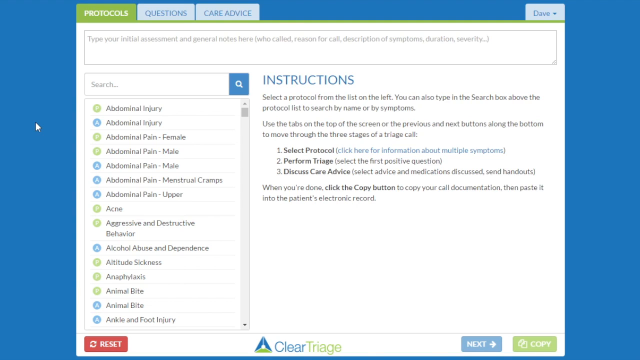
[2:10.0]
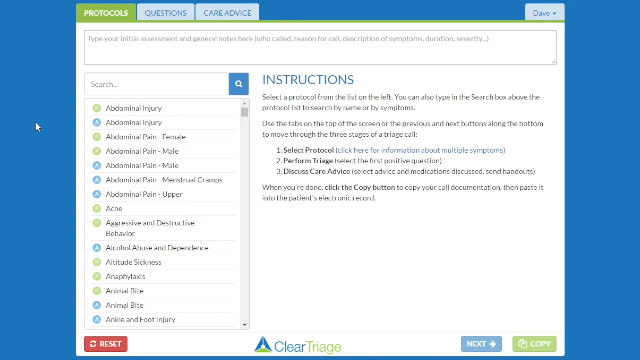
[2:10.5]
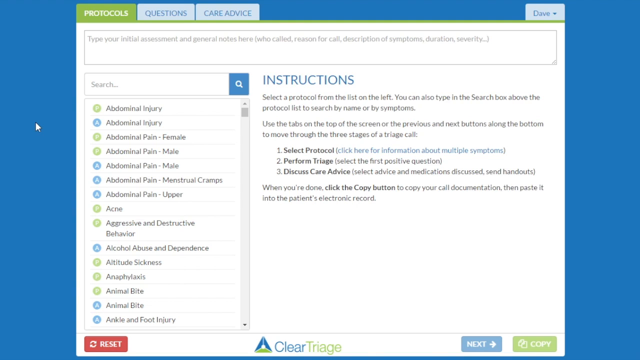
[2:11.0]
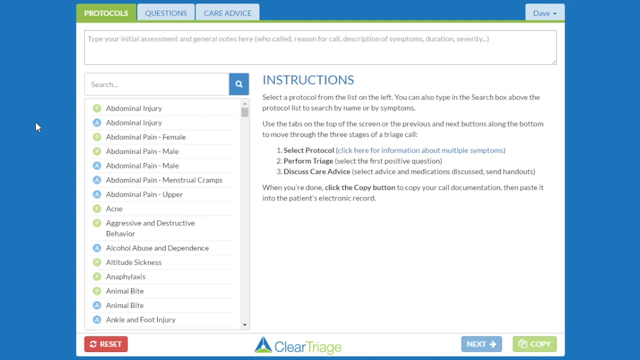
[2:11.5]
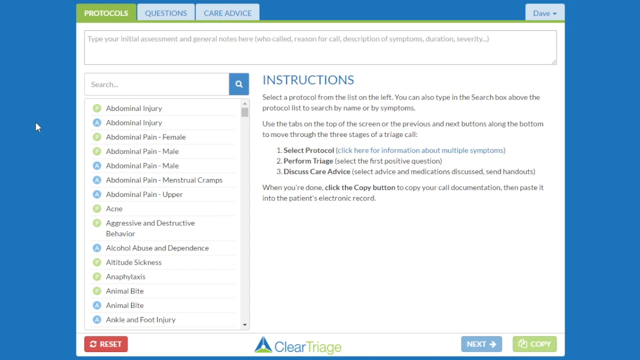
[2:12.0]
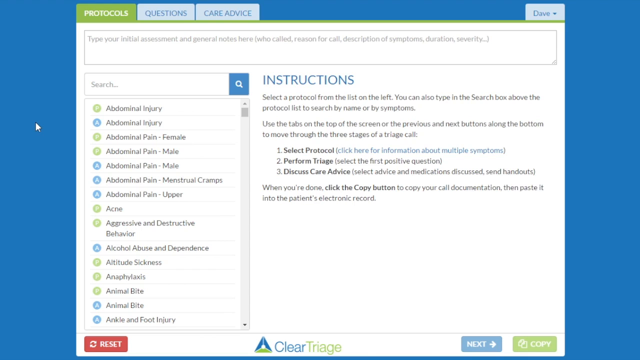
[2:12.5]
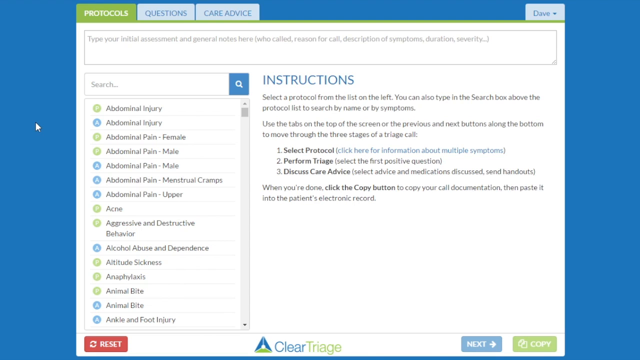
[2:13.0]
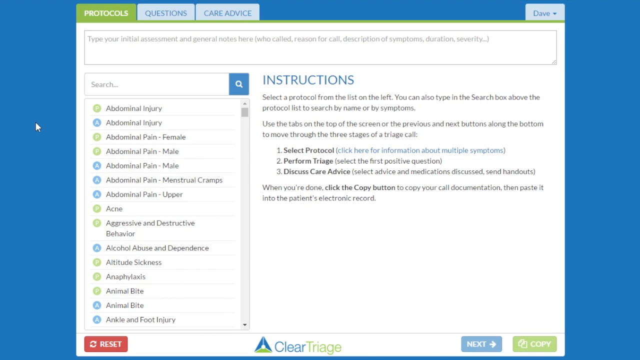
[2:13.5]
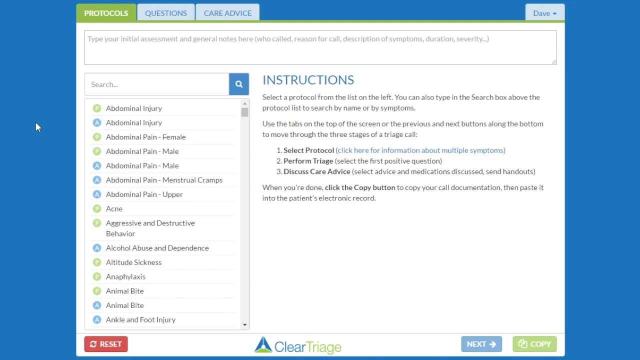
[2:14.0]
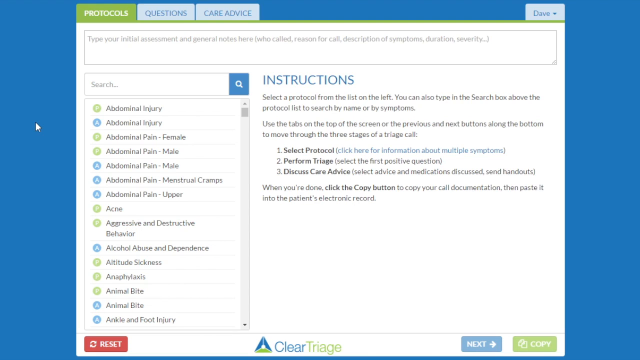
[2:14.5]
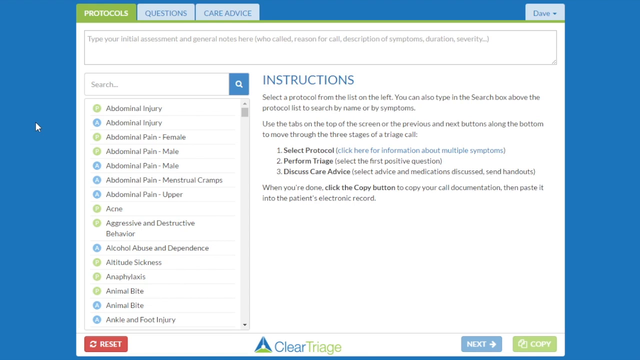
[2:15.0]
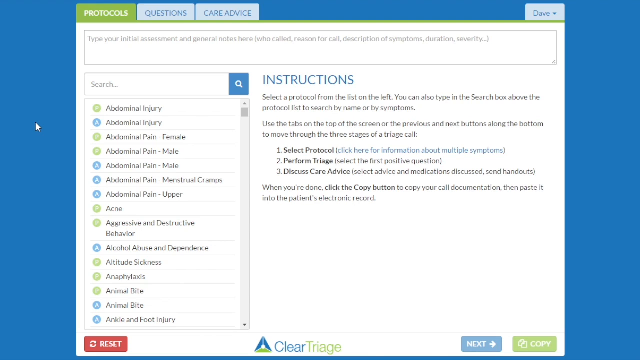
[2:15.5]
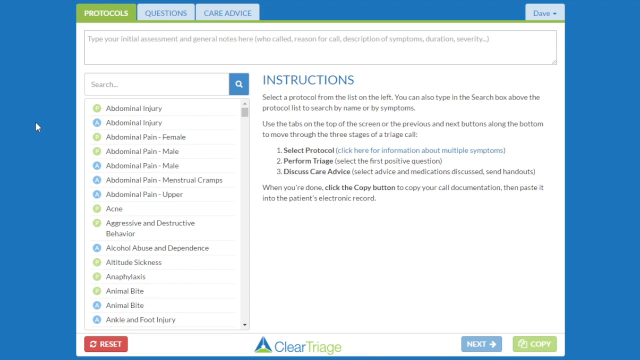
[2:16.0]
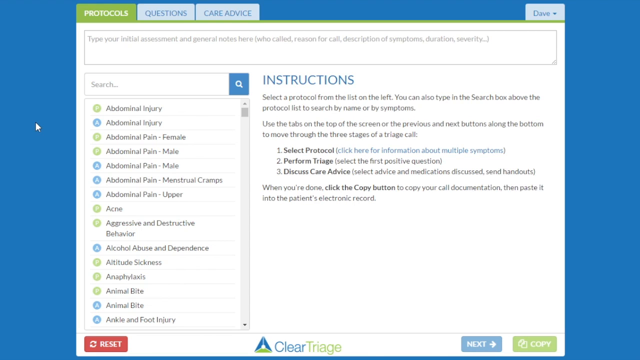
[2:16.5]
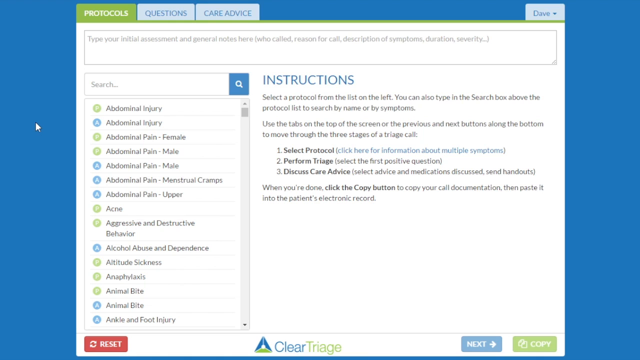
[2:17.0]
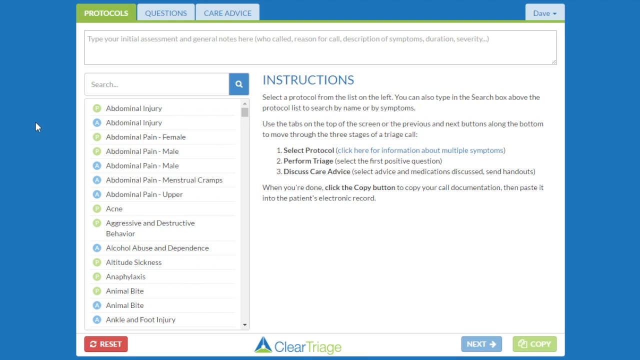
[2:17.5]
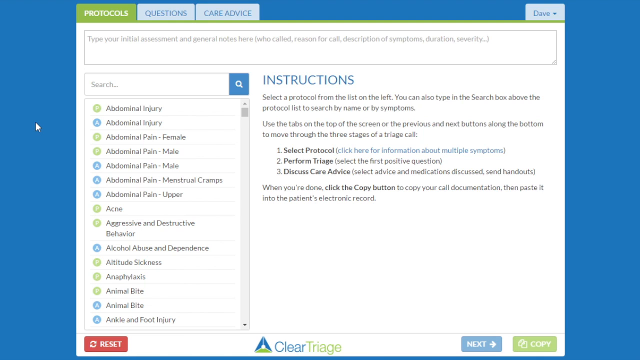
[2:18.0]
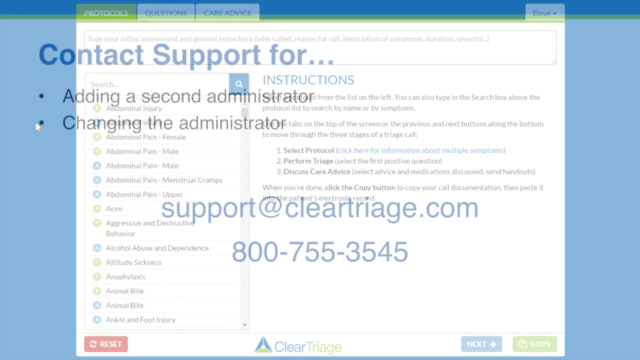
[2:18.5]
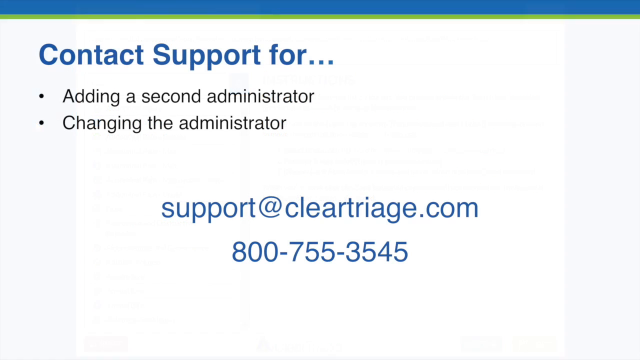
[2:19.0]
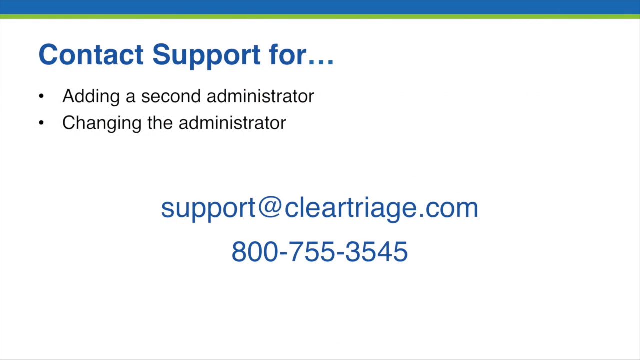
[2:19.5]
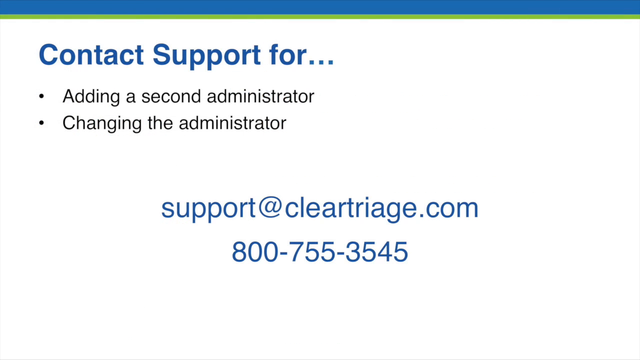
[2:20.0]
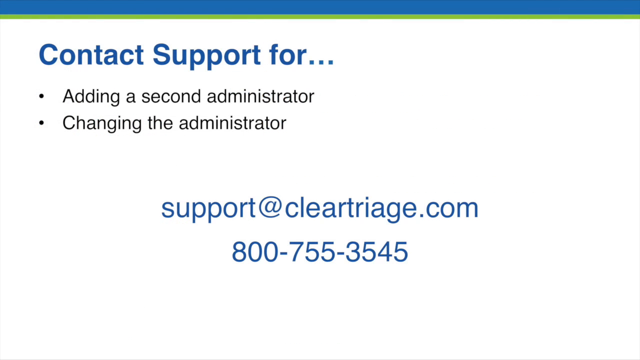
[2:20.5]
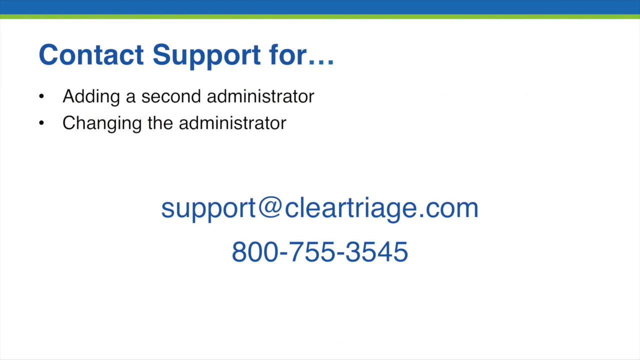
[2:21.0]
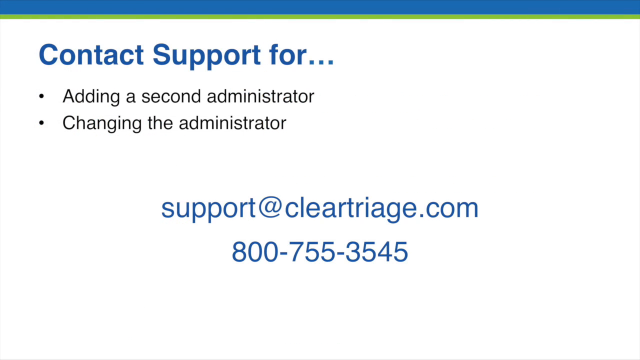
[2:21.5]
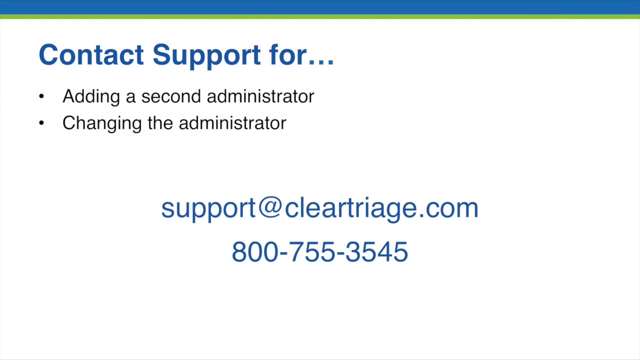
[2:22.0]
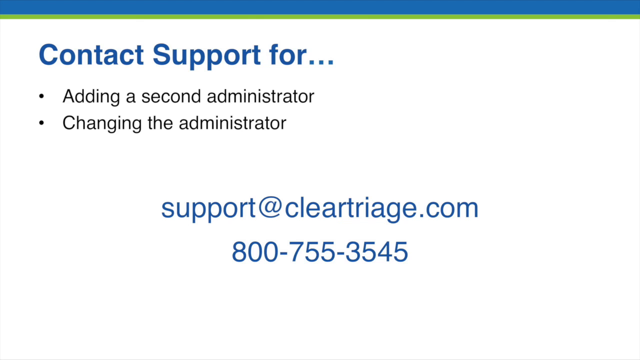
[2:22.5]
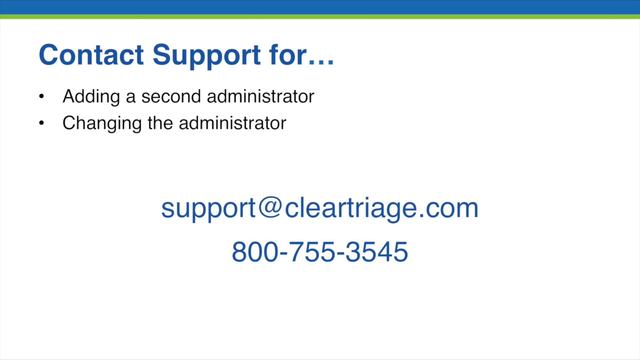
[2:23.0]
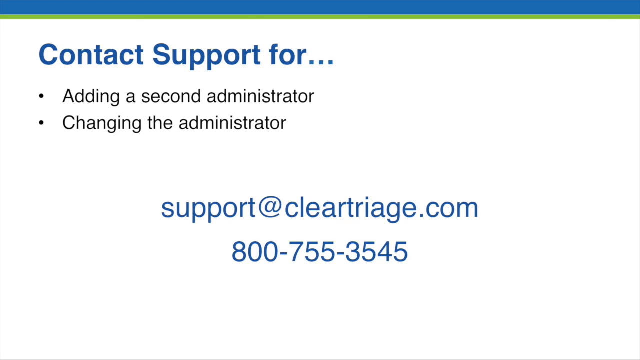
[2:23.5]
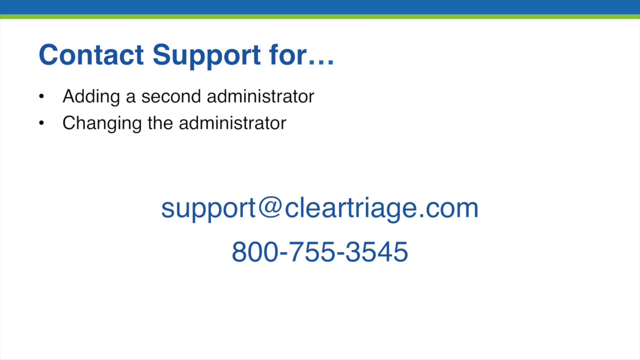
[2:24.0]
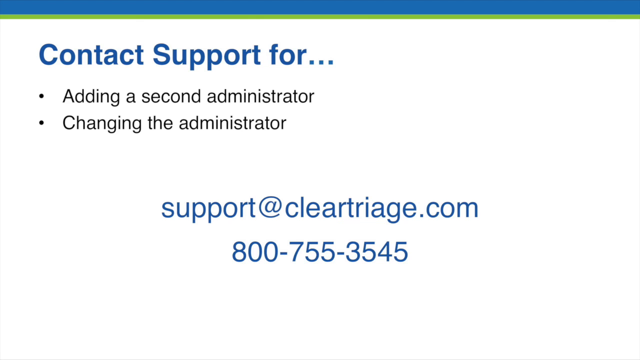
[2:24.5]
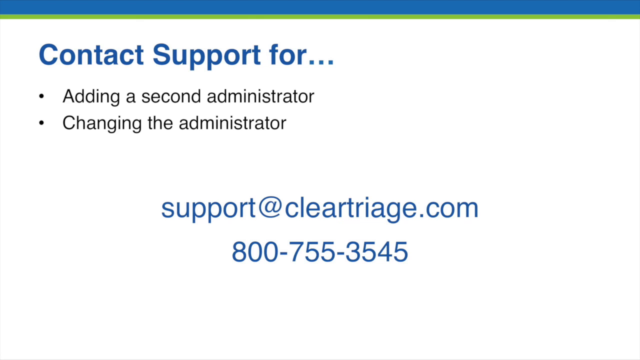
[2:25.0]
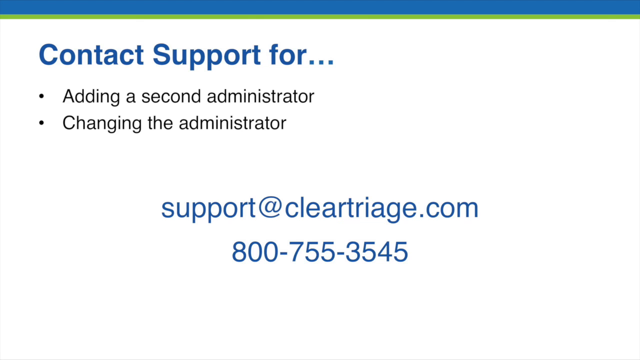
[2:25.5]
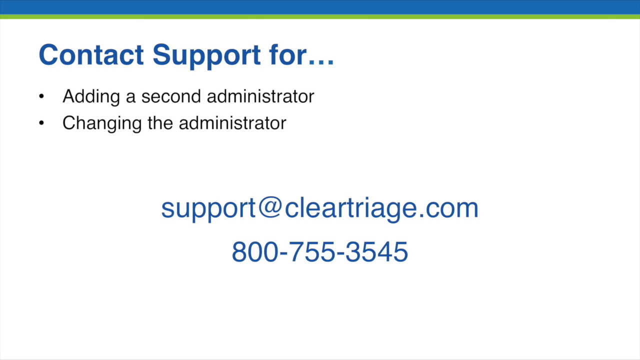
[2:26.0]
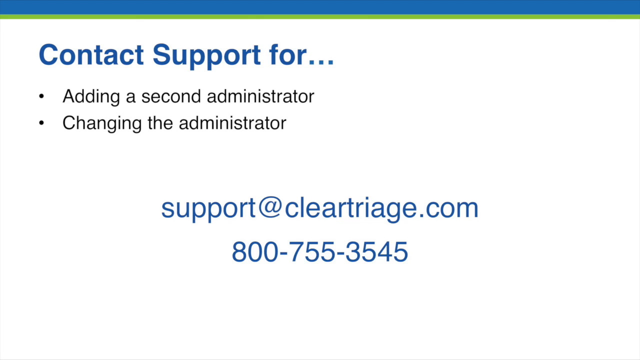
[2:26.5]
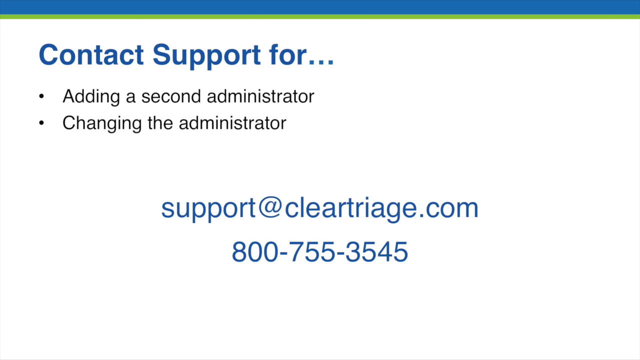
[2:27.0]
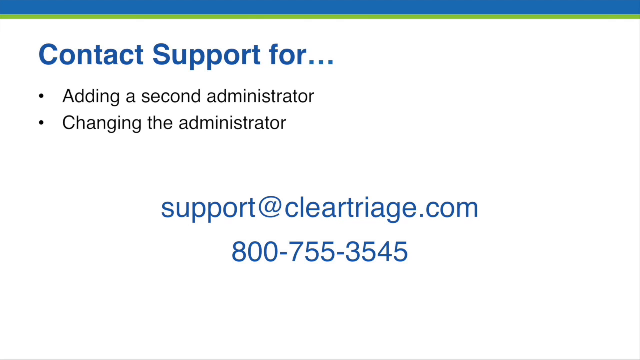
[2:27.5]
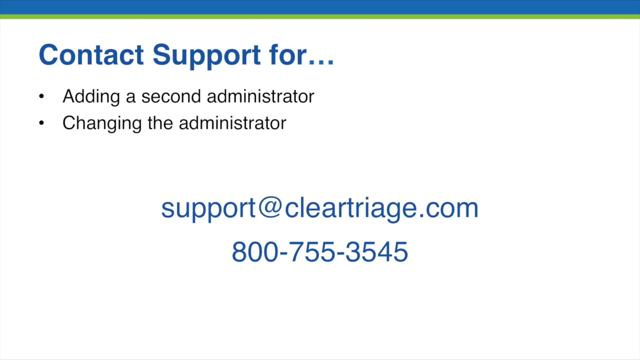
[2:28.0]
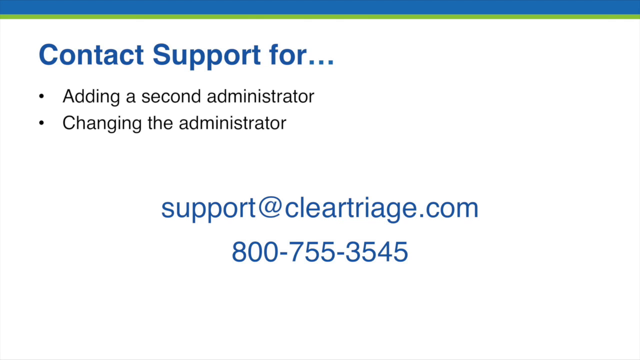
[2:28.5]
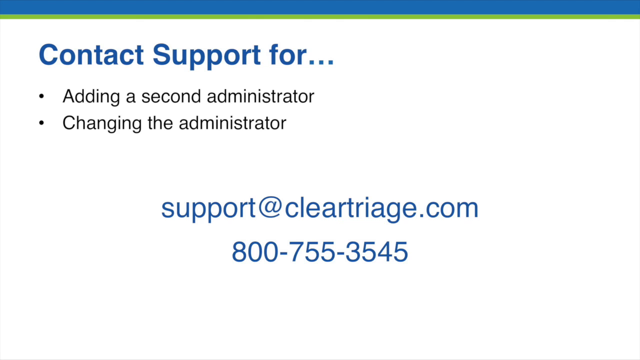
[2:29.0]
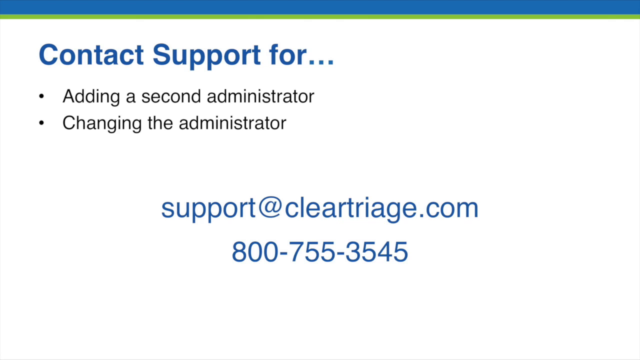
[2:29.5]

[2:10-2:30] The main protocols page is open, showing the protocol instructions and, on the left-hand side, the list of protocol conditions running alphabetically on this page from abdominal injury to ankle and foot injury, with a scroll button to go down to the rest of the alphabet. The instructions contain three points: select protocol, perform triage and discuss care advice. Four tabs are at the top of the page: the first, the current Protocols page, is green, while the others, in pale blue against the dark blue background, are Questions, Care Advice and Dave. The screen then changes to a white-background information page with the Clear Triage colours in blue and green at the top. It has a message about contacting support for adding a second administrator and for changing the administrator, followed by the contact information support@cleartriage.com and phone number 800-755-3545. The video stays on this page for a few seconds.